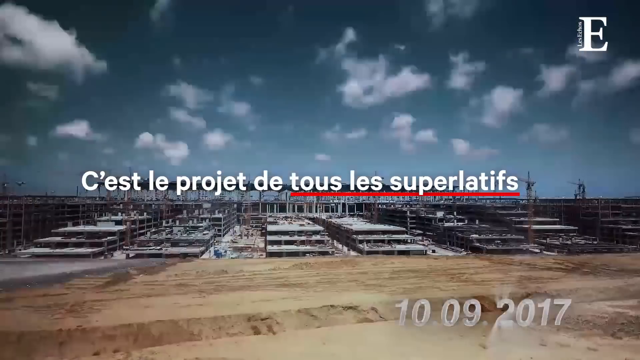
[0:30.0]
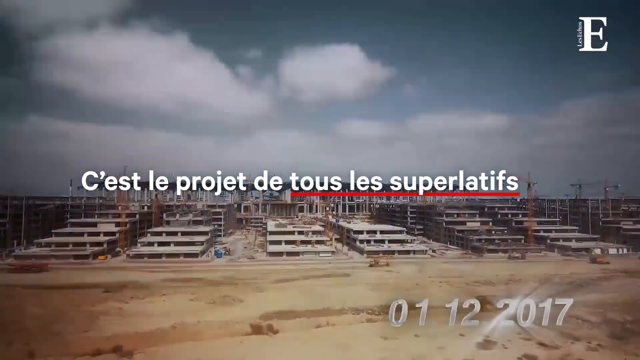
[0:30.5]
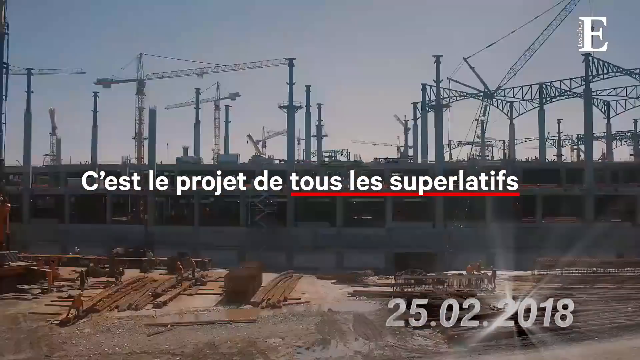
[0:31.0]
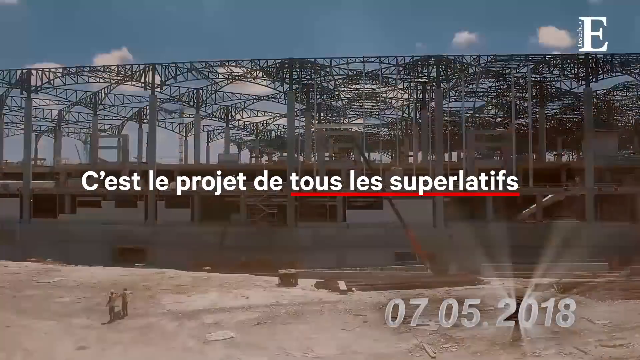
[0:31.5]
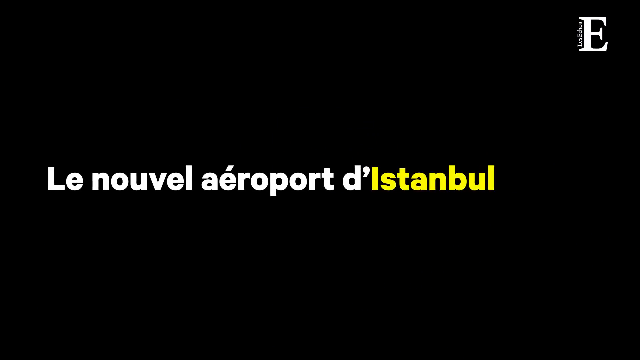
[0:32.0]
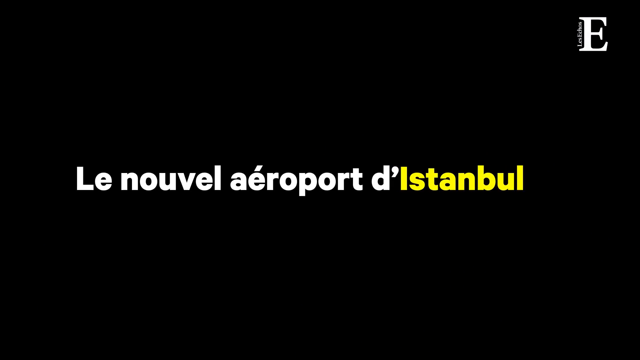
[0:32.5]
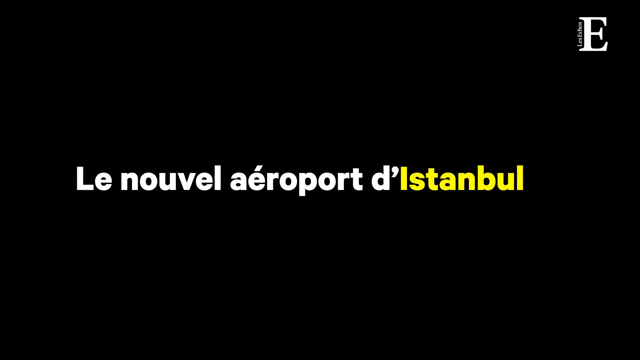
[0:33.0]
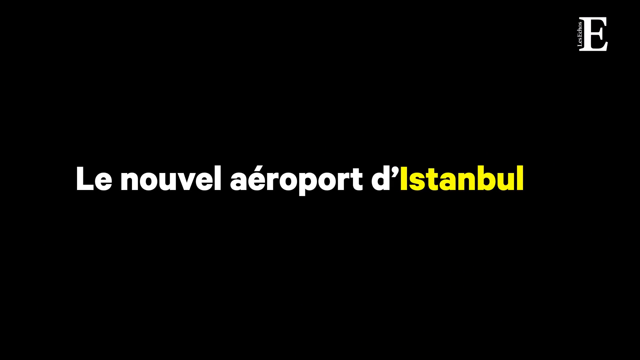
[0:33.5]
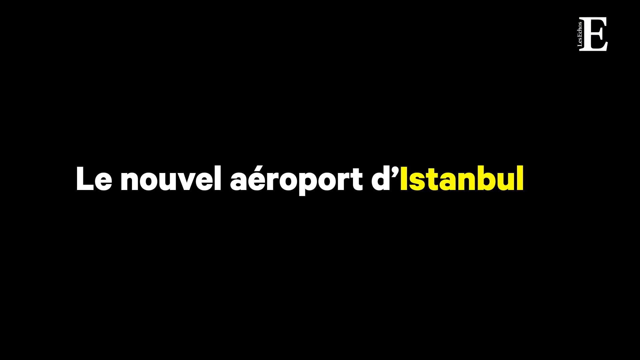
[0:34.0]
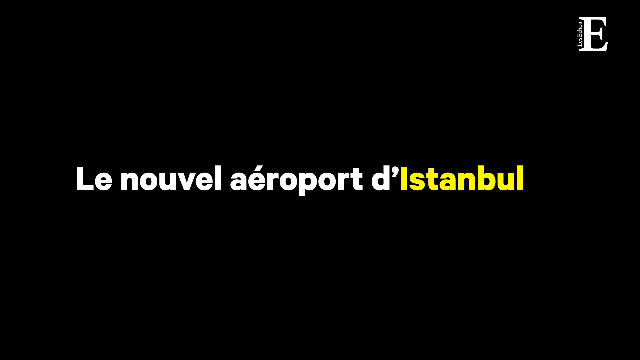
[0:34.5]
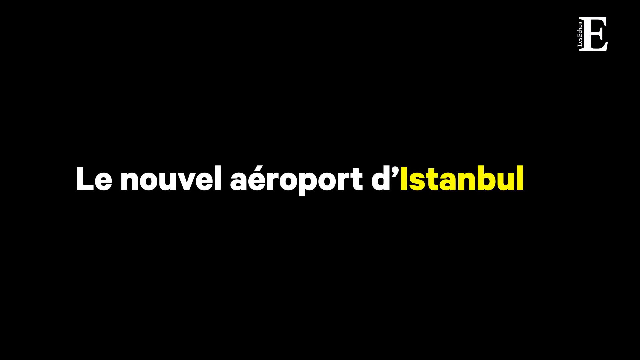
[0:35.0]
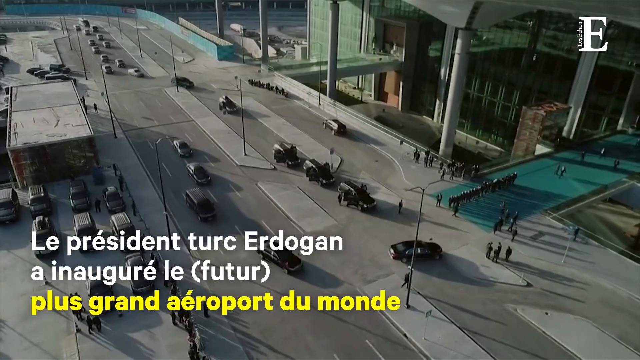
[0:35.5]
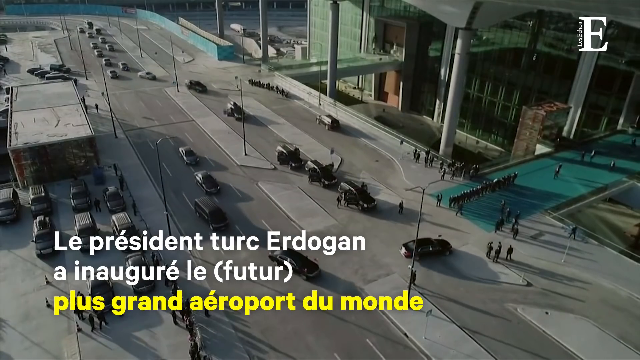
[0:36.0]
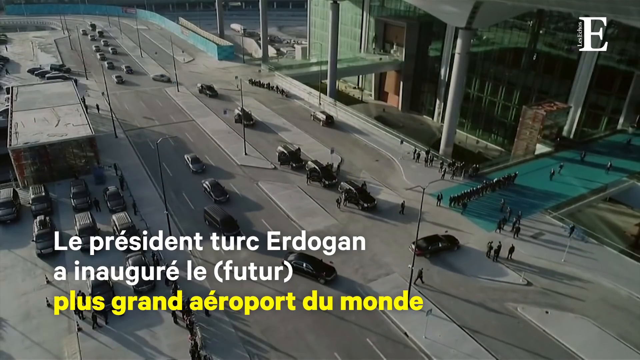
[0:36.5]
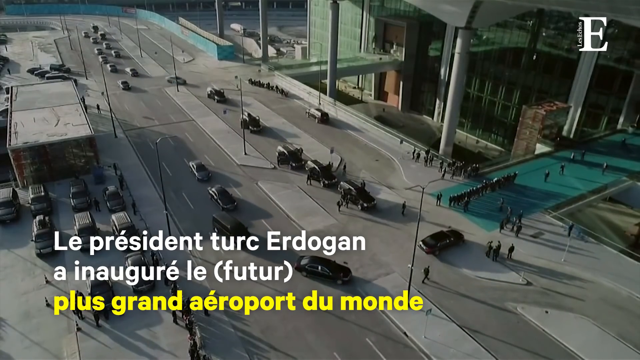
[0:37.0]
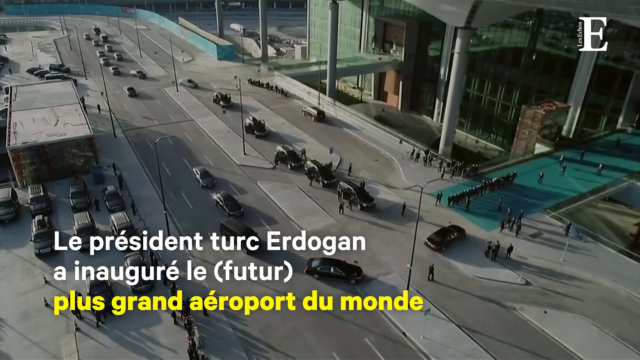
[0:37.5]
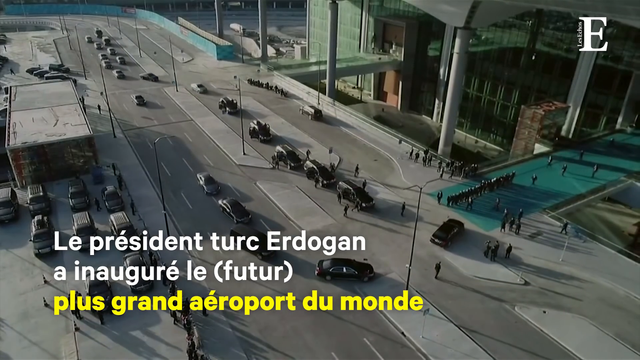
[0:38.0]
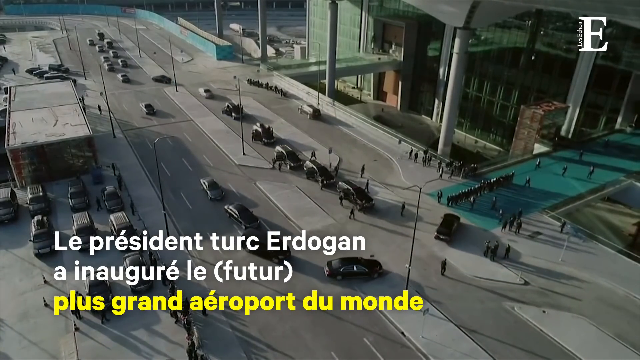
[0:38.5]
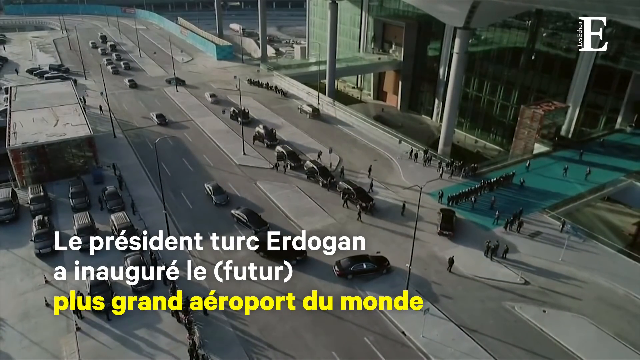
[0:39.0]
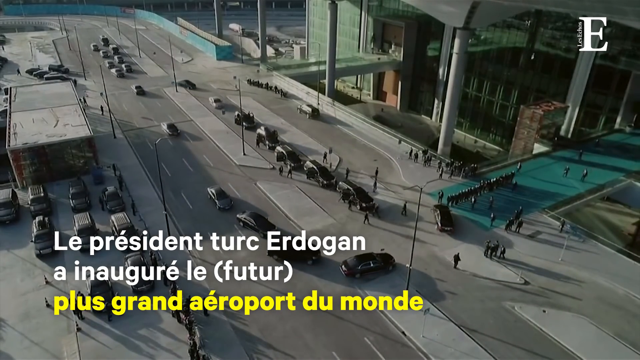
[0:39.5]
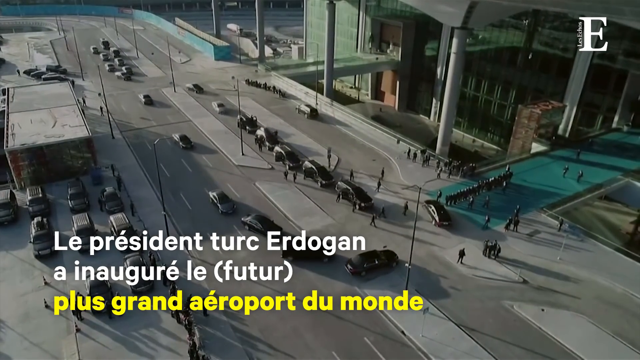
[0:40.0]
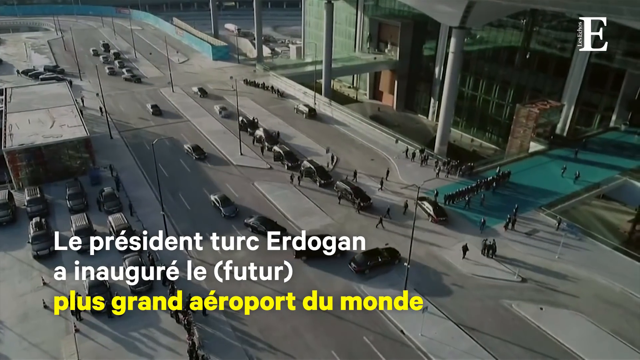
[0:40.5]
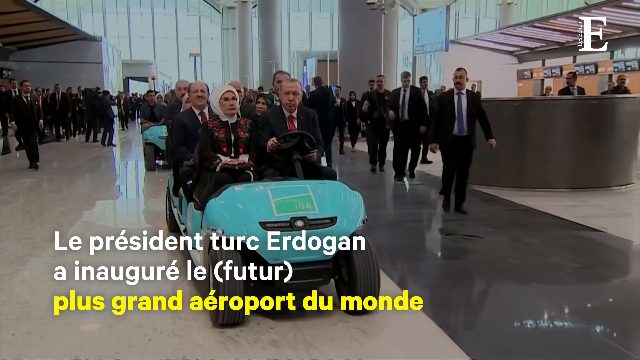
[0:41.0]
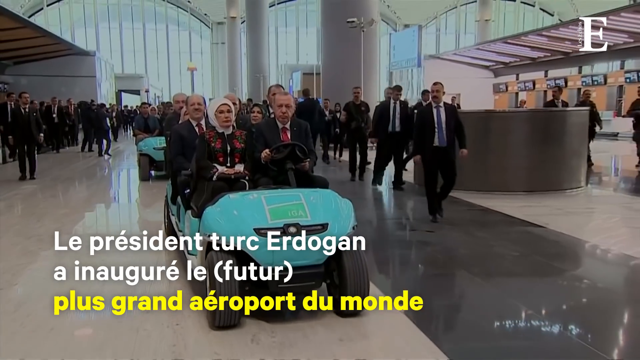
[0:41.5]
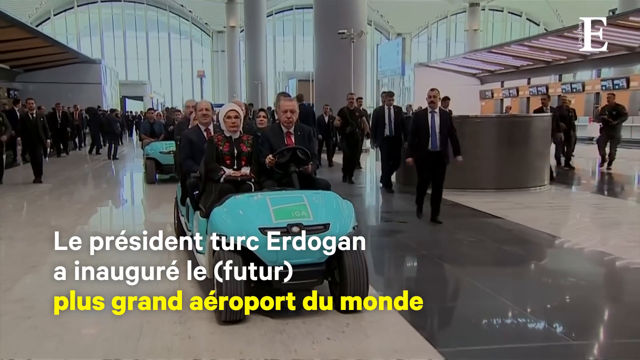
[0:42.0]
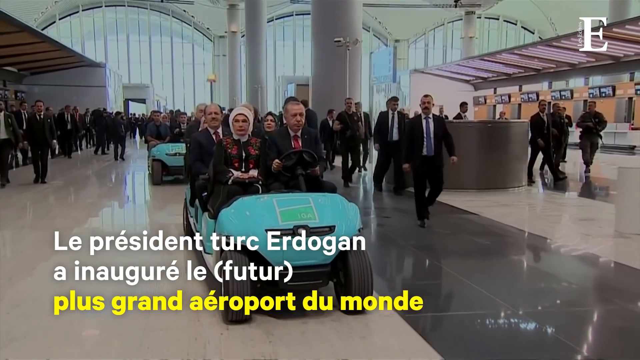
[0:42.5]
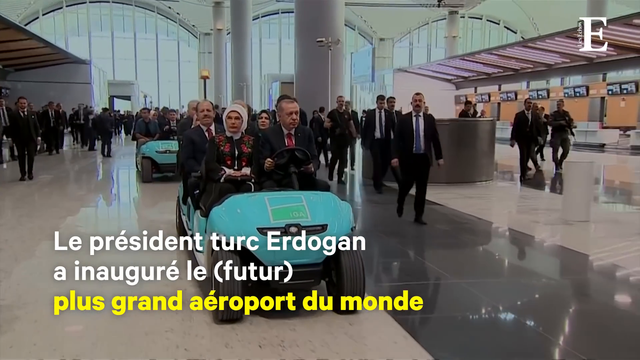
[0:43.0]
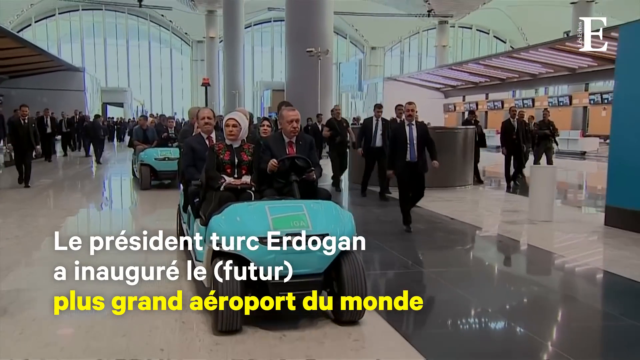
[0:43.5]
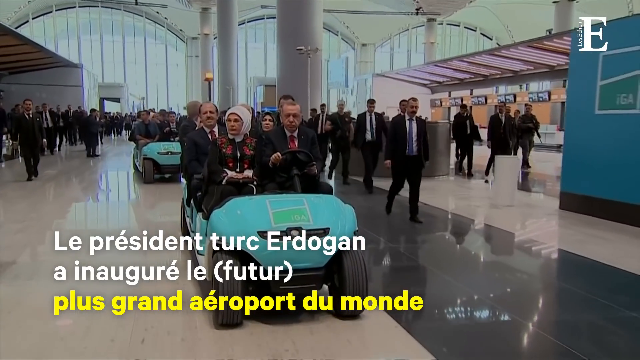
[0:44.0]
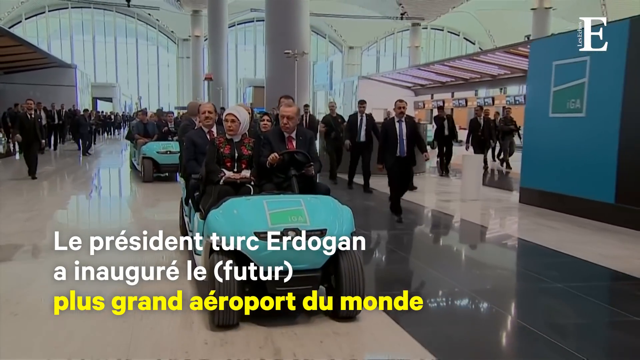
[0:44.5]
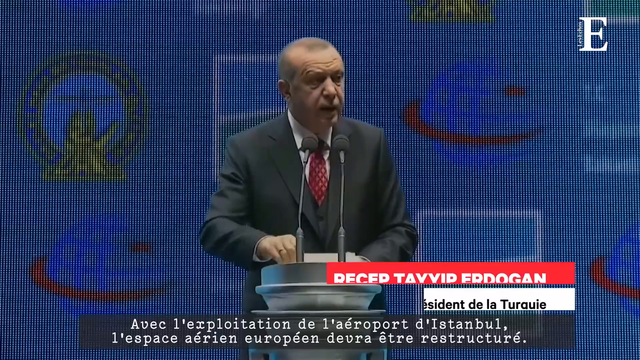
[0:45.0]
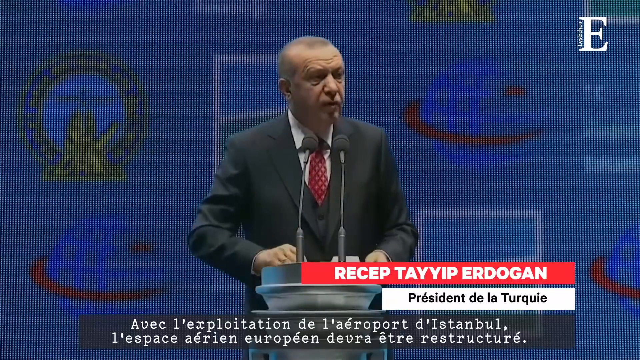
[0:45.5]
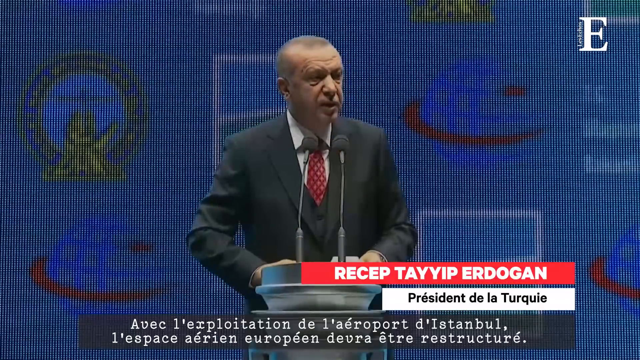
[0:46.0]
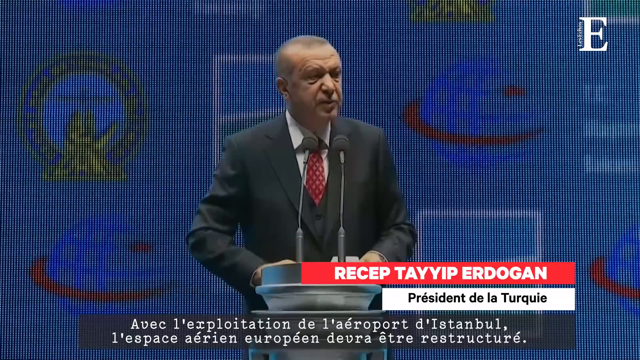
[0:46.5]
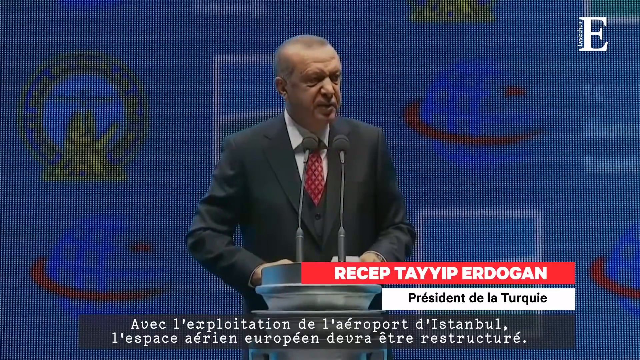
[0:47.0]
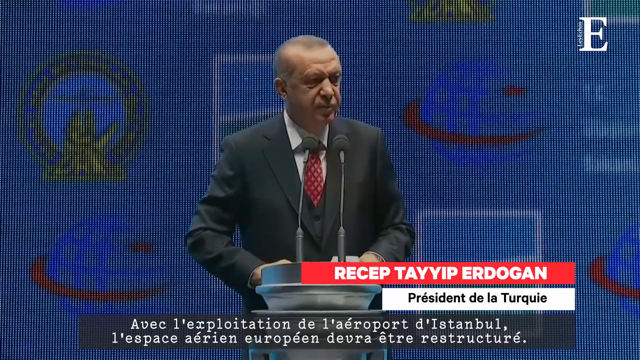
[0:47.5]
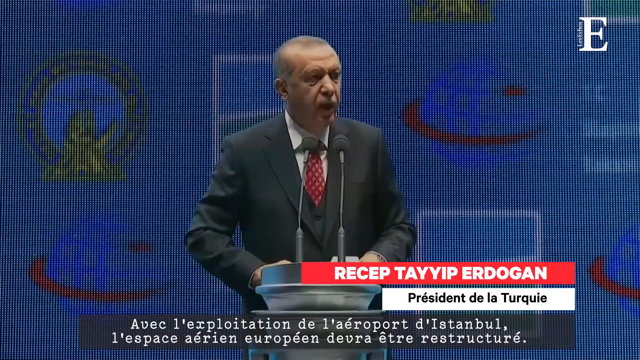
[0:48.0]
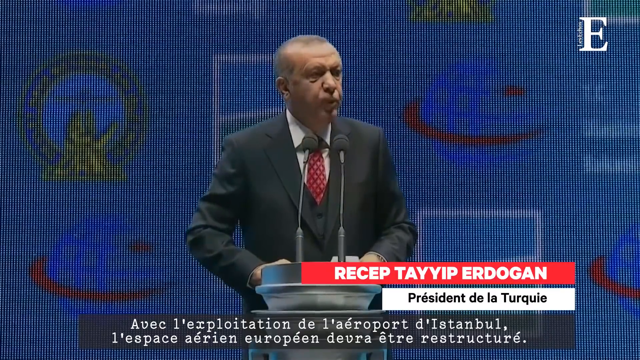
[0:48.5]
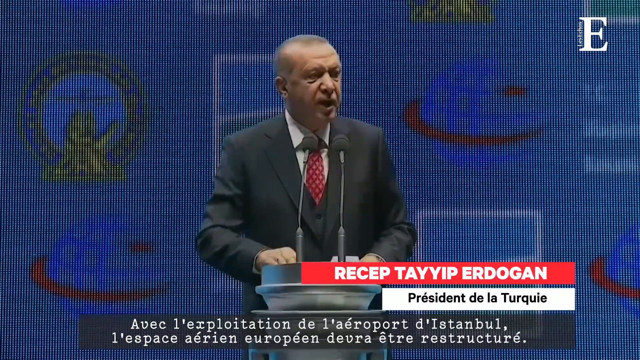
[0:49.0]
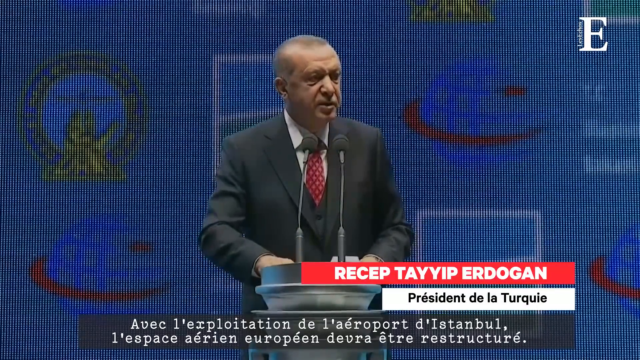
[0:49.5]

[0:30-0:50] Construction footage is followed by the outside of an entrance to a fancy airport, apparently Istanbul Airport. Inside, people ride around in little golf carts of the kind used in airports. The interior looks like a fancy hotel, with marble floors, and the event seems to be some sort of opening ceremony: everyone in the golf carts wears a suit and looks dressed up. Guards or police-type people with machine guns stand on the sides, and what appears to be a lot of special security walks around the people in the golf carts. A man talks at a podium; he looks like he may be the president of something, and he is possibly making the opening speech for the finished airport.